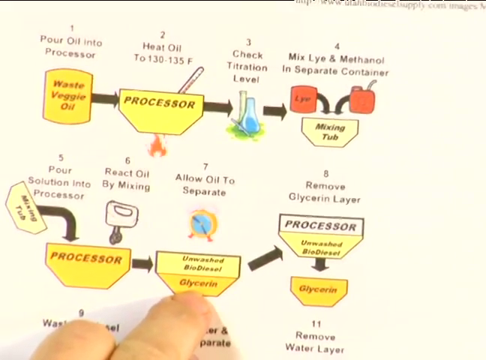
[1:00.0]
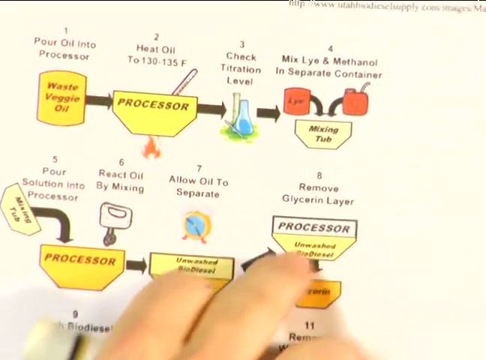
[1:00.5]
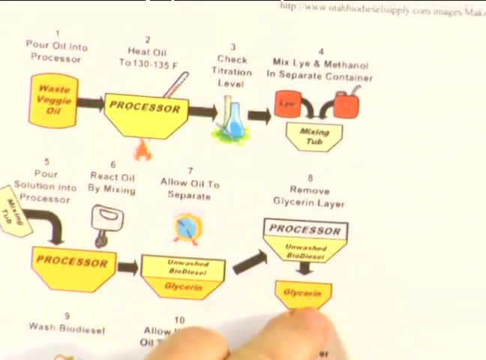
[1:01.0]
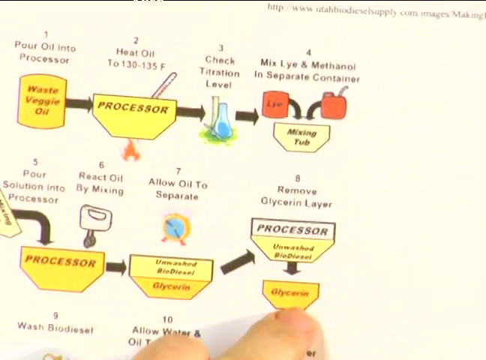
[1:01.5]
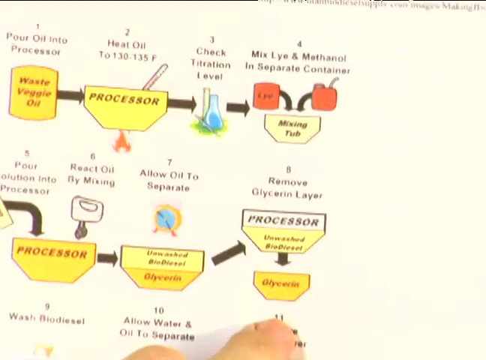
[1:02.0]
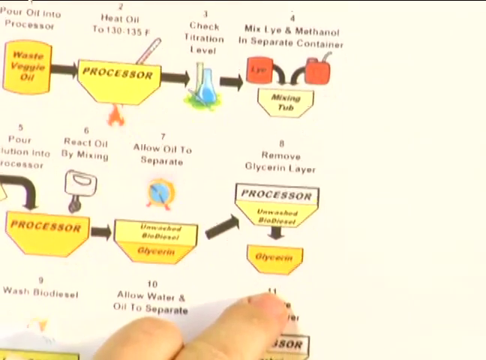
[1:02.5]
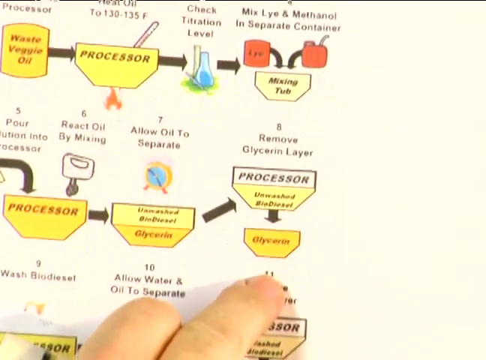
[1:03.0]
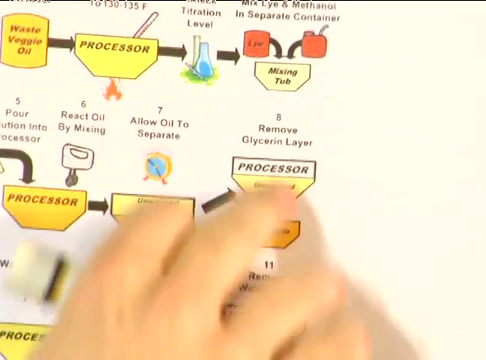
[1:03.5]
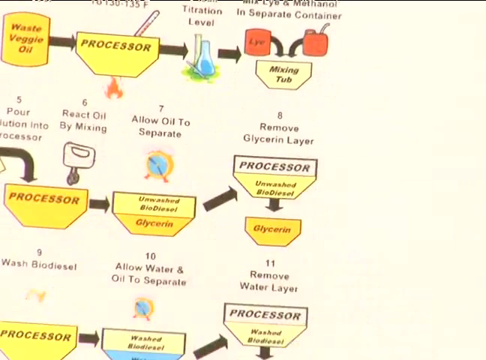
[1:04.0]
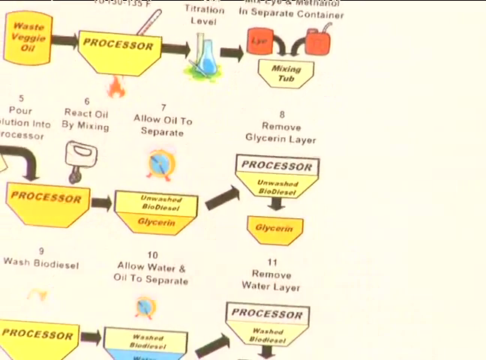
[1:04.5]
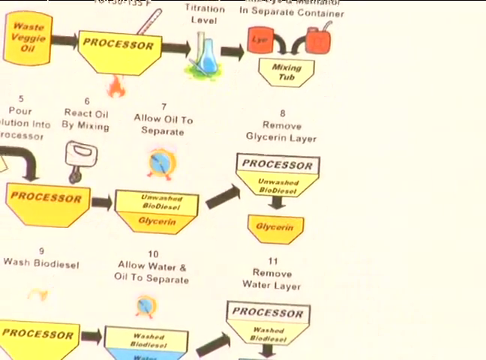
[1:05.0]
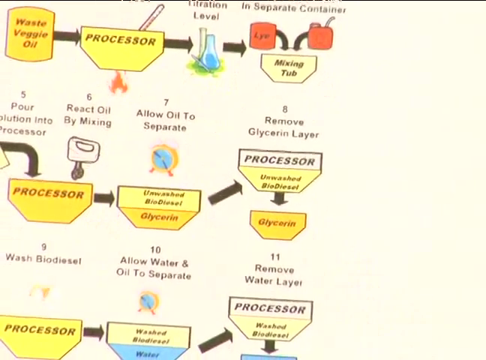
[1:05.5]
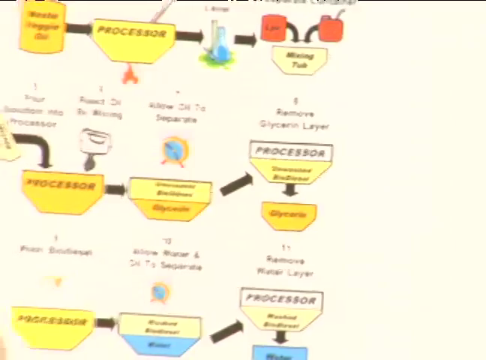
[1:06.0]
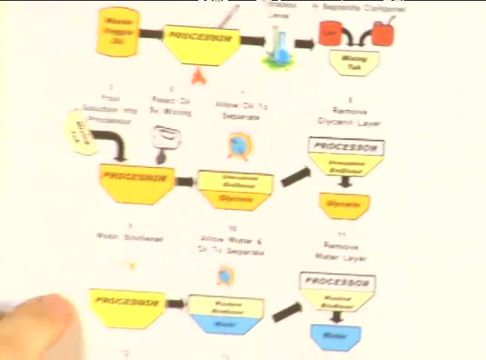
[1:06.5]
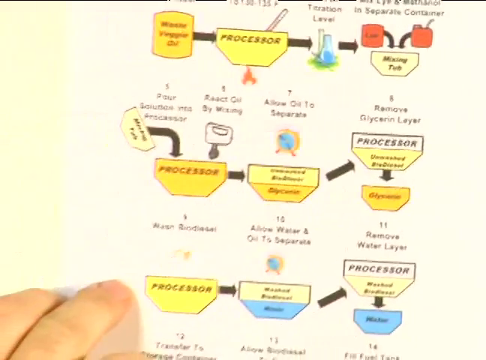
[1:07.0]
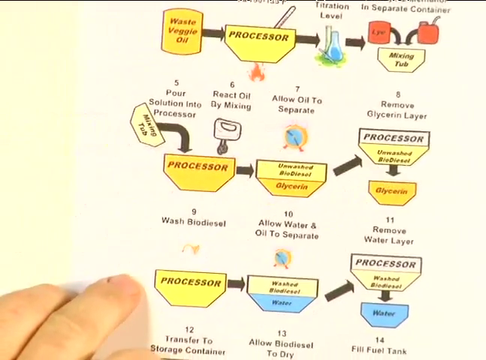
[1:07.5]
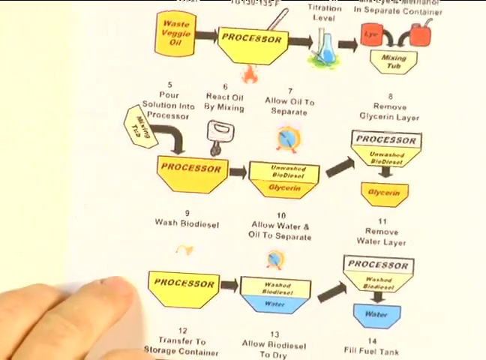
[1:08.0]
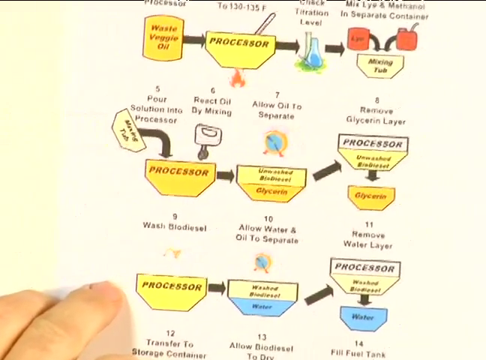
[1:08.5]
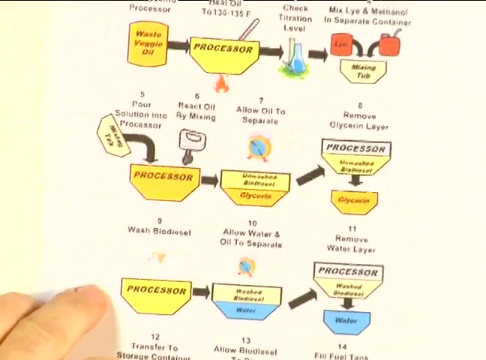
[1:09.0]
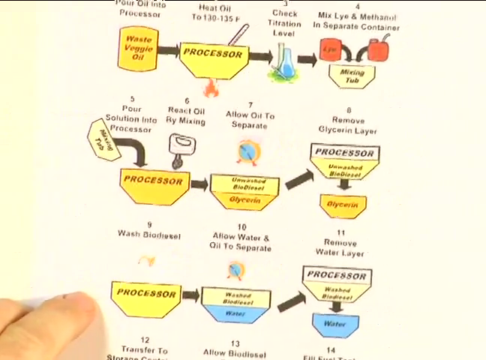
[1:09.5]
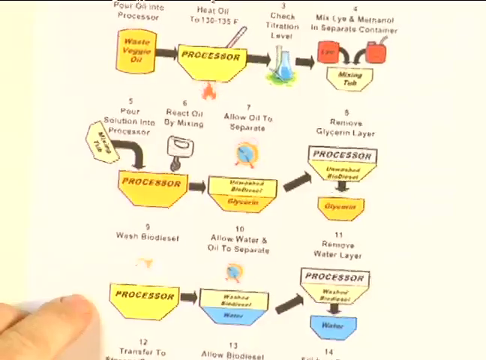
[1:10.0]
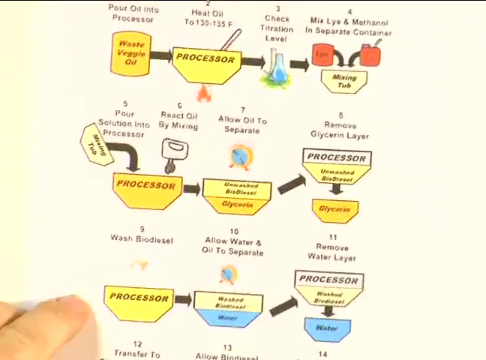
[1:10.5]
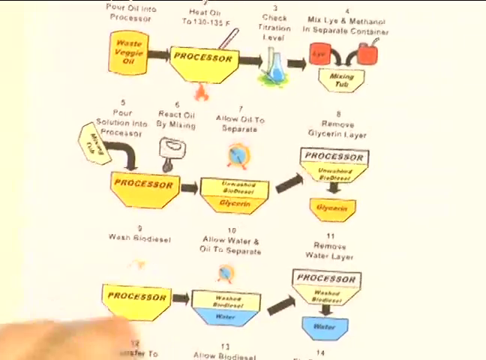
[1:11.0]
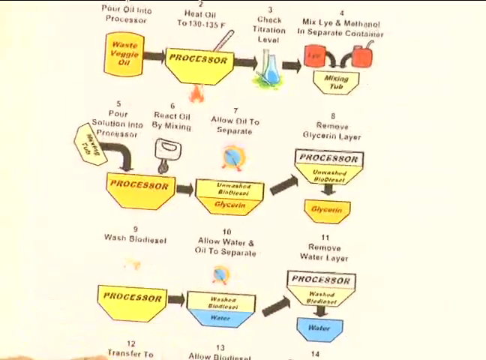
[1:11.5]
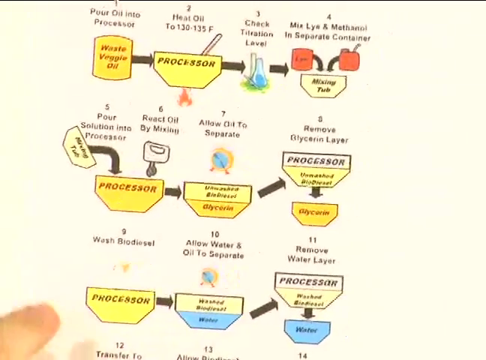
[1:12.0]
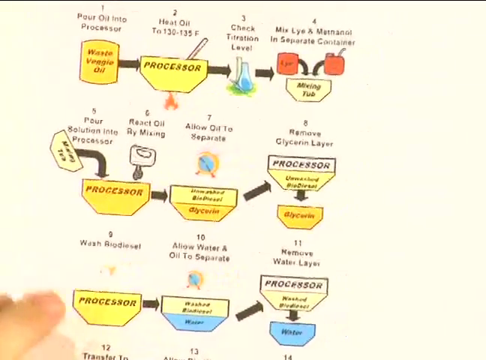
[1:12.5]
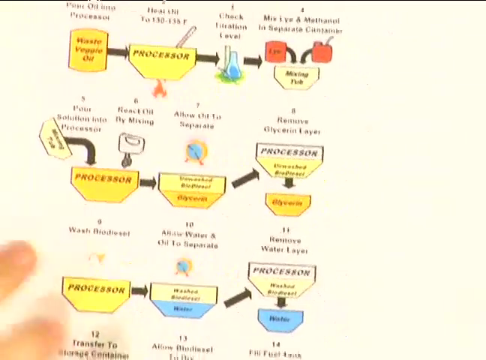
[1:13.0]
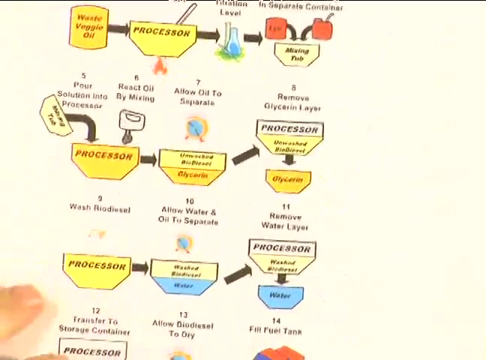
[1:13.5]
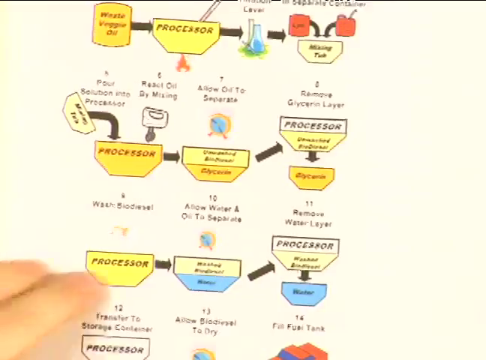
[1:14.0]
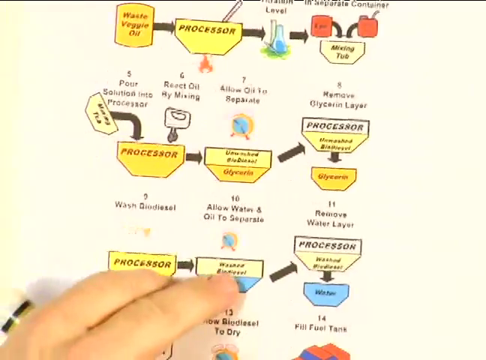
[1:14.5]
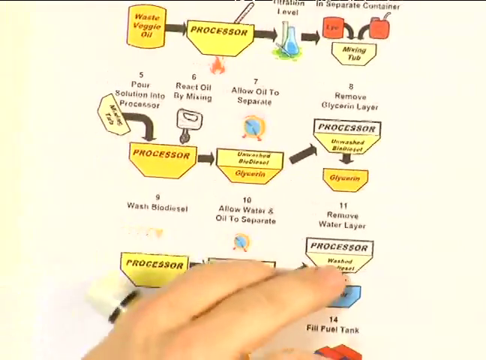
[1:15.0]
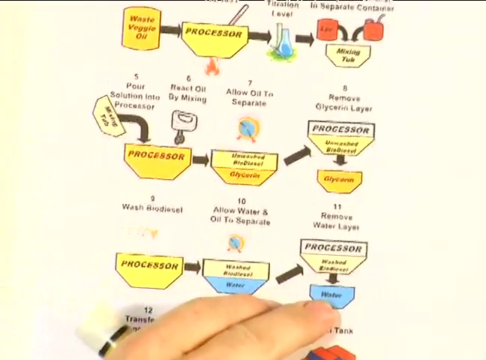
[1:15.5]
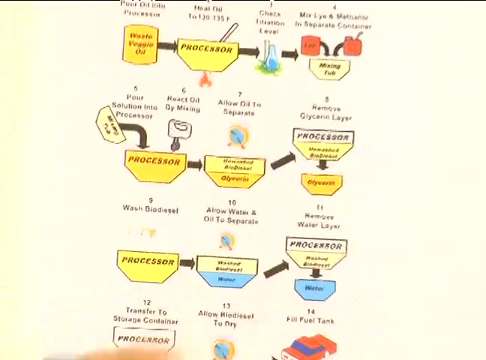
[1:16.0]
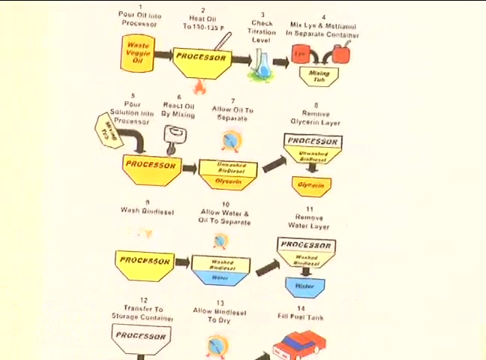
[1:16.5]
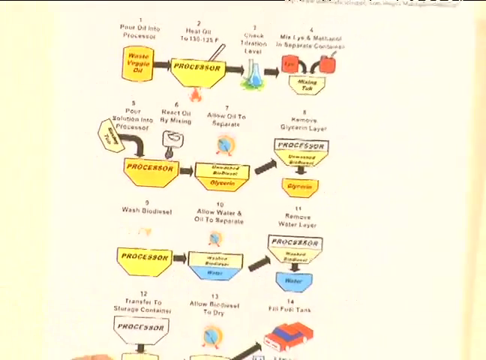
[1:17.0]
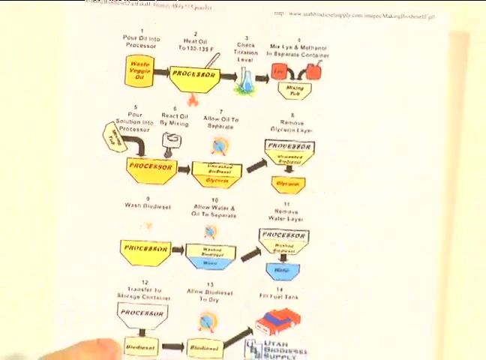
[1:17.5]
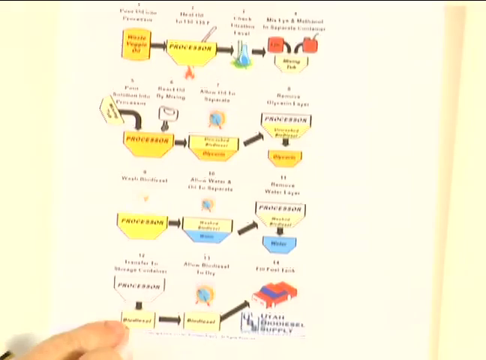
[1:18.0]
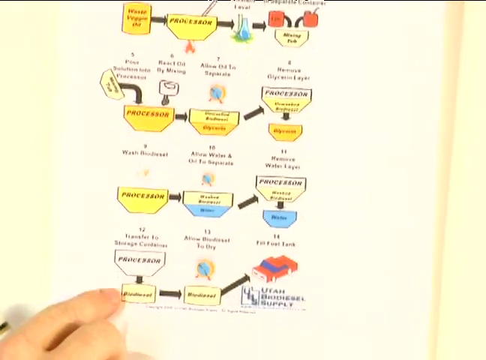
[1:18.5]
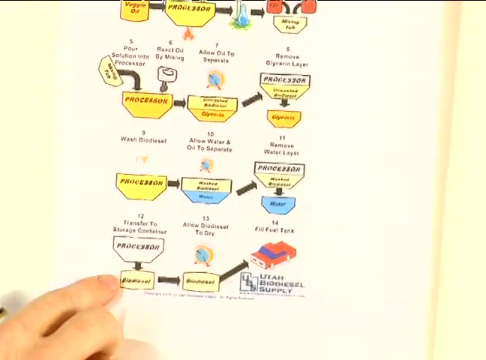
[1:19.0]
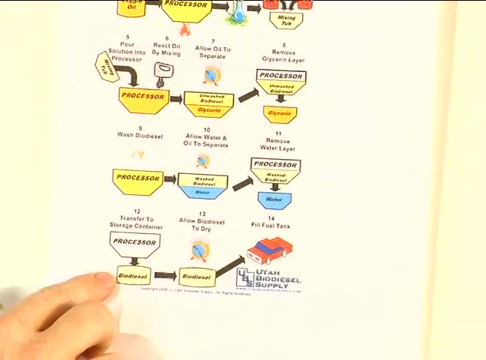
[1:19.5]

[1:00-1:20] The experimenter looks at the illustration of the experiment, which shows the sequence from the top: pouring oil into the processor, heating oil, checking filtration level, mixing lye and methanol in separate containers, pouring the solution into the processor, reacting oil by mixing, allowing oil to separate, and removing the glycerin layer. The view opens up a little more to reveal other steps: step 9, "wash biodiesel"; step 10, "allow water and oil to separate"; step 11, "remove the water layer". The steps are illustrated with images in a sequence. The camera pans down, revealing the last few steps of the process.